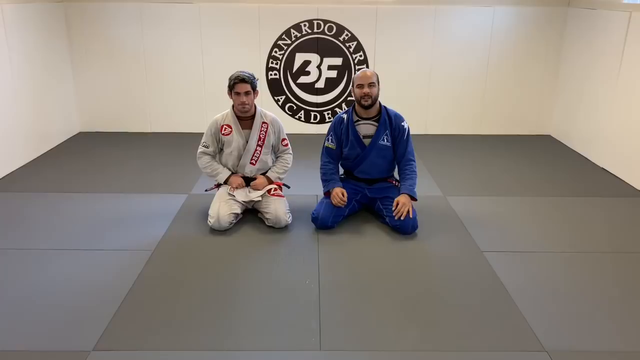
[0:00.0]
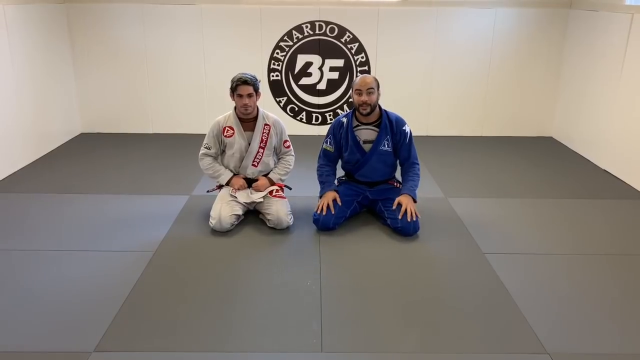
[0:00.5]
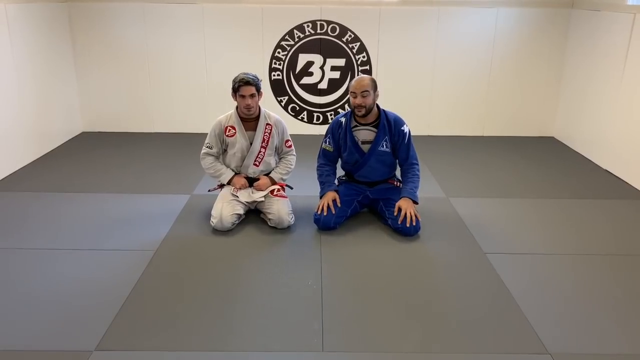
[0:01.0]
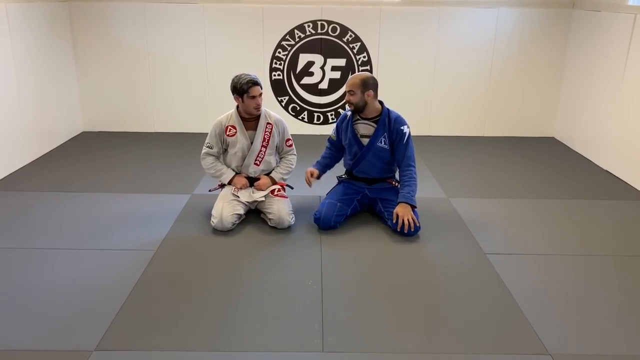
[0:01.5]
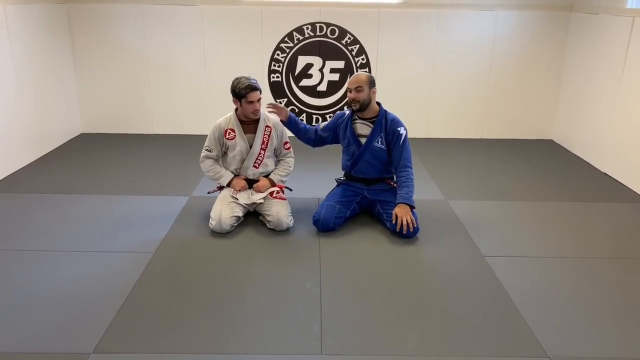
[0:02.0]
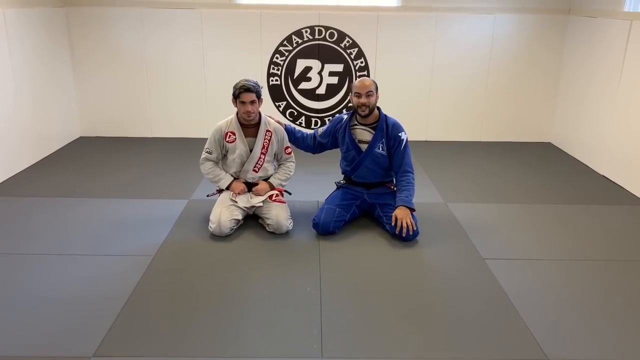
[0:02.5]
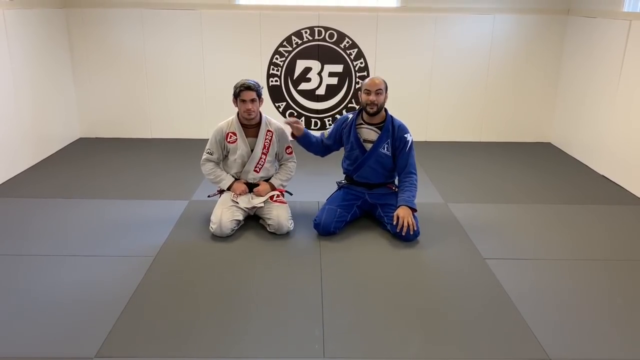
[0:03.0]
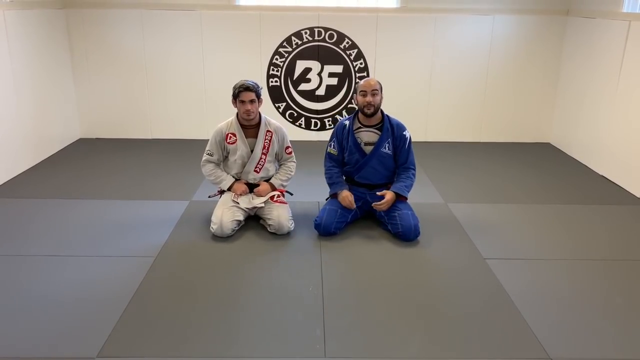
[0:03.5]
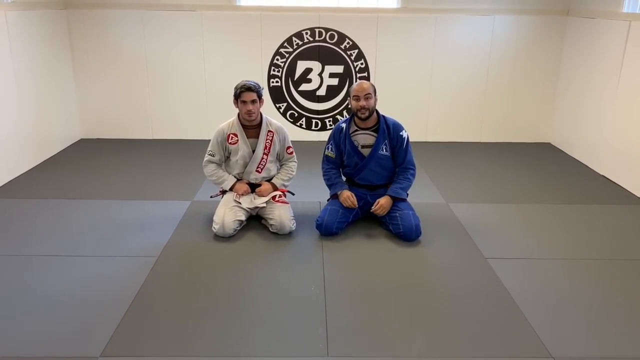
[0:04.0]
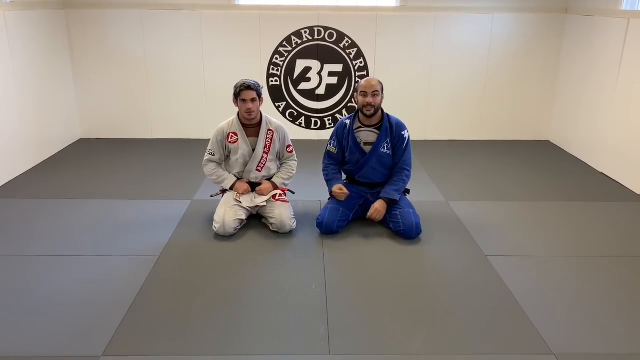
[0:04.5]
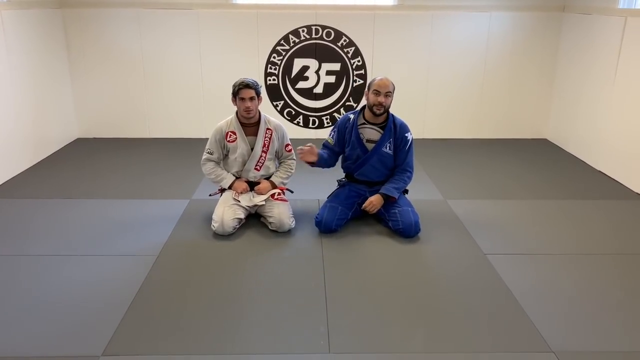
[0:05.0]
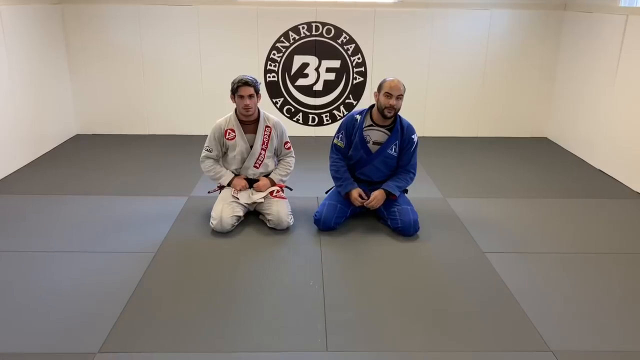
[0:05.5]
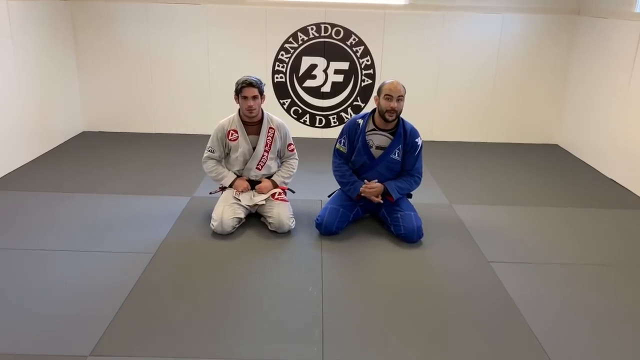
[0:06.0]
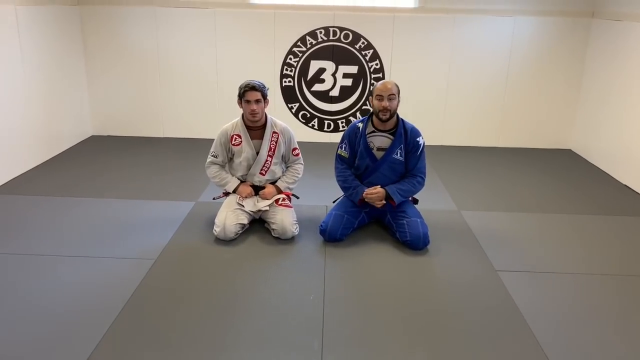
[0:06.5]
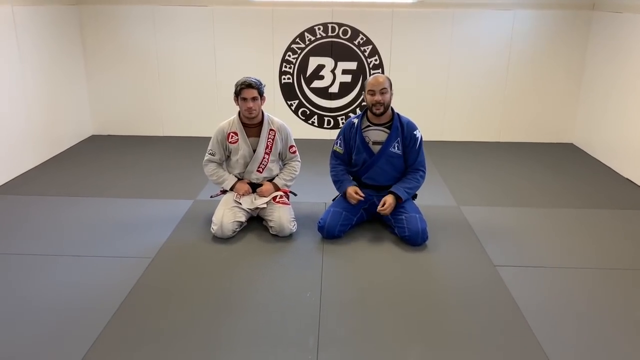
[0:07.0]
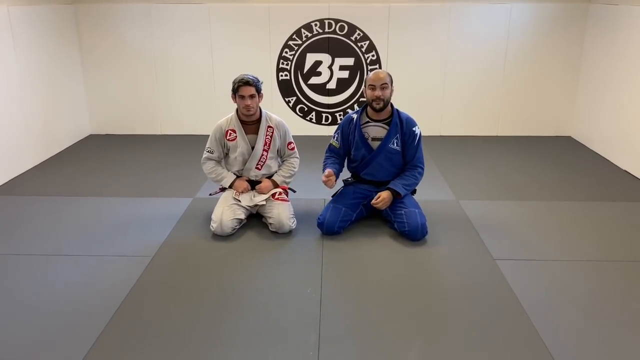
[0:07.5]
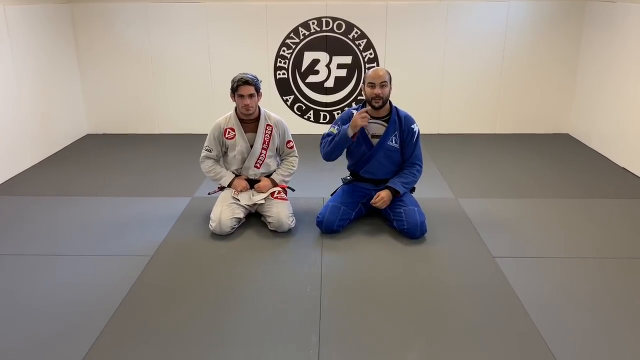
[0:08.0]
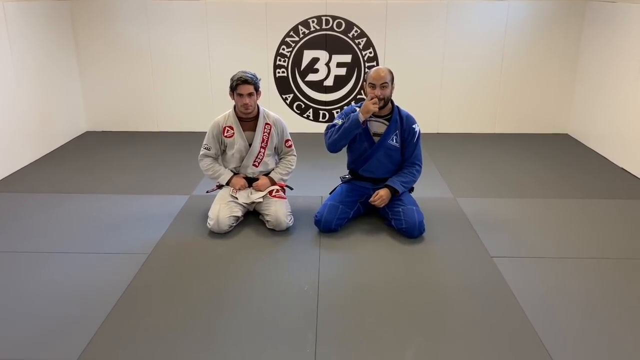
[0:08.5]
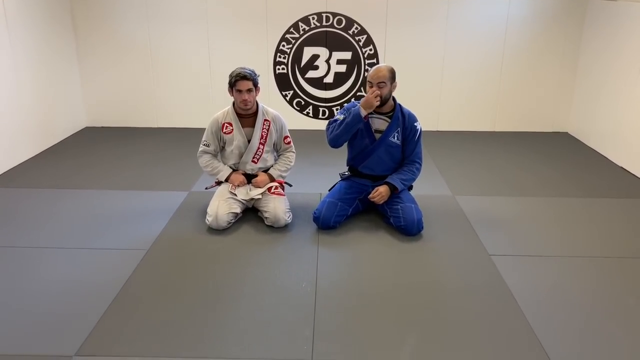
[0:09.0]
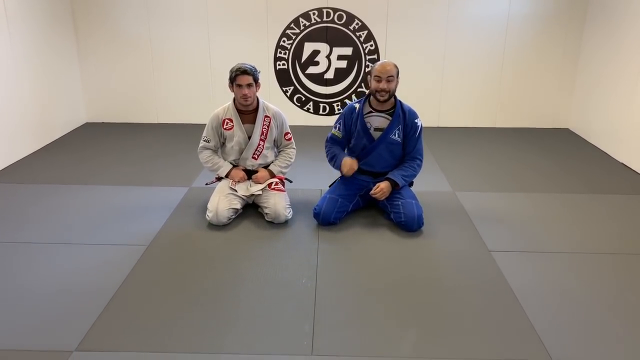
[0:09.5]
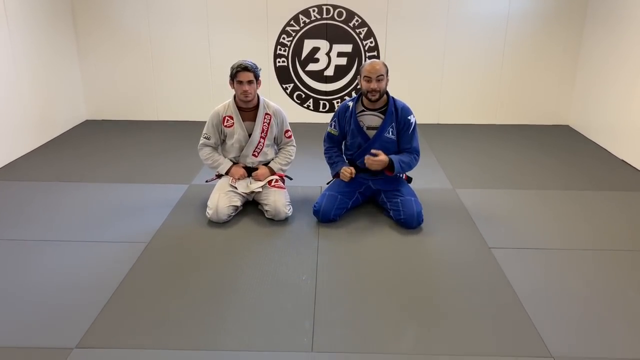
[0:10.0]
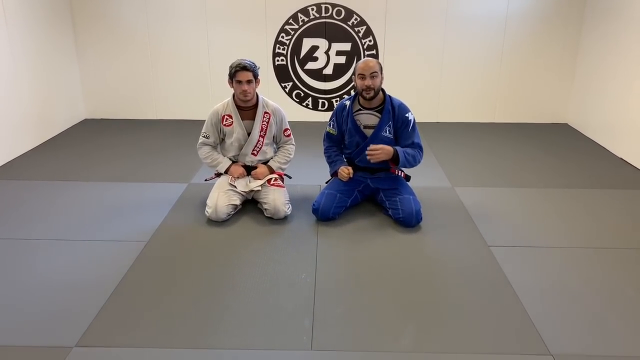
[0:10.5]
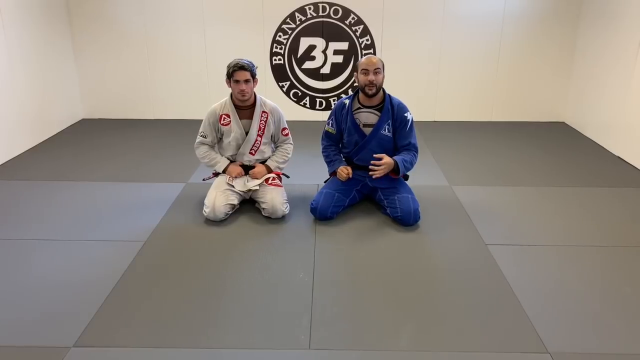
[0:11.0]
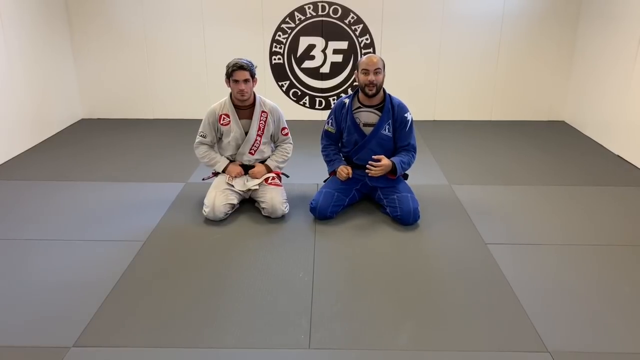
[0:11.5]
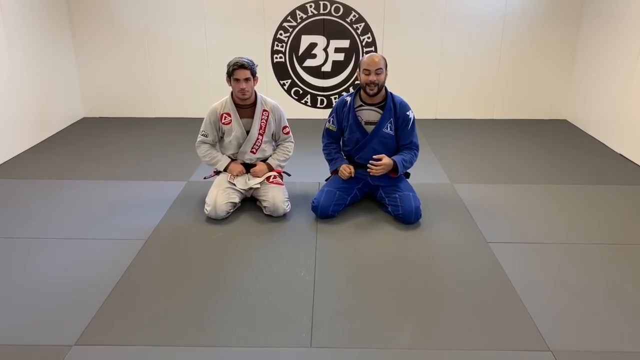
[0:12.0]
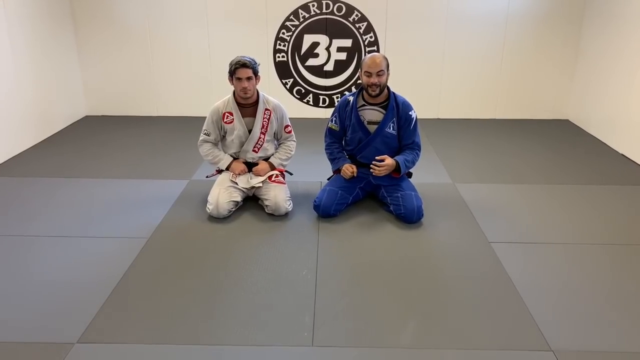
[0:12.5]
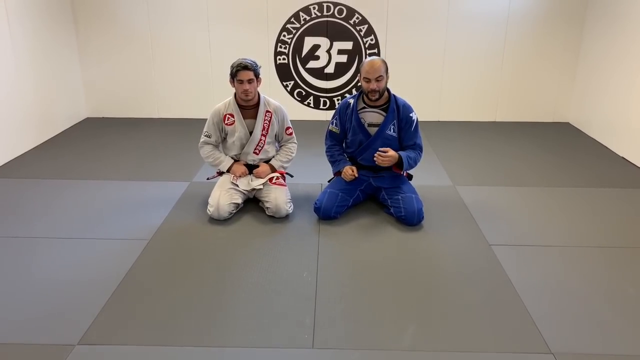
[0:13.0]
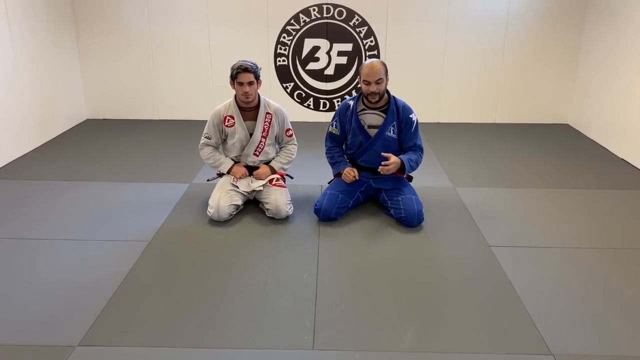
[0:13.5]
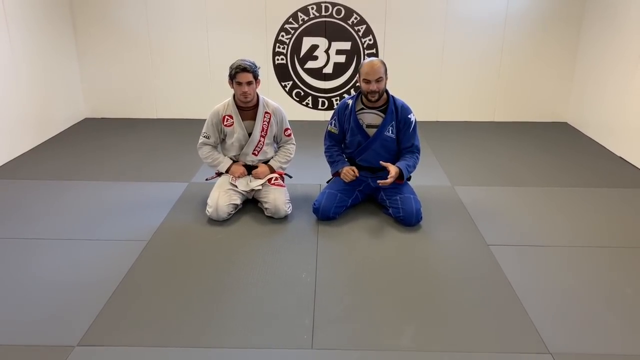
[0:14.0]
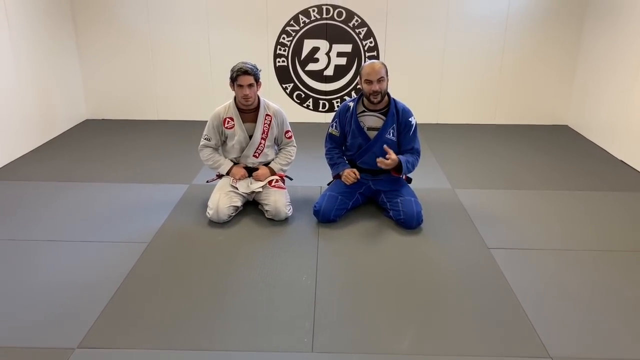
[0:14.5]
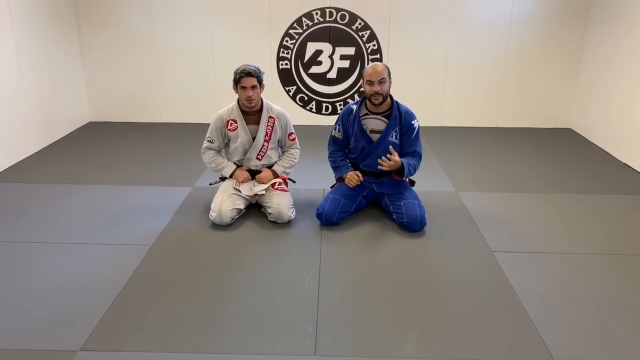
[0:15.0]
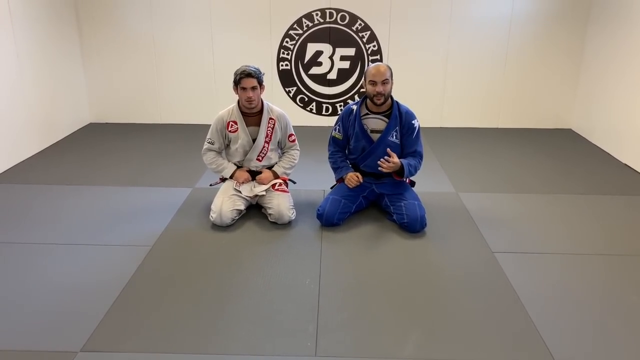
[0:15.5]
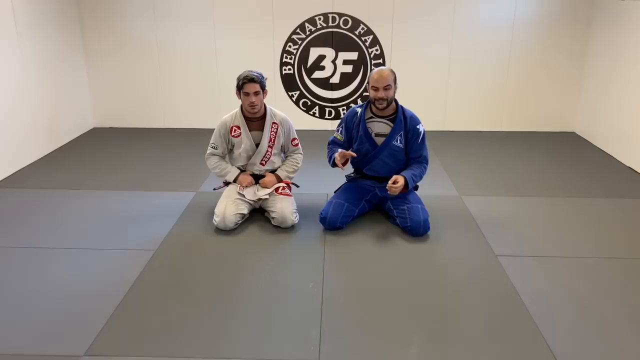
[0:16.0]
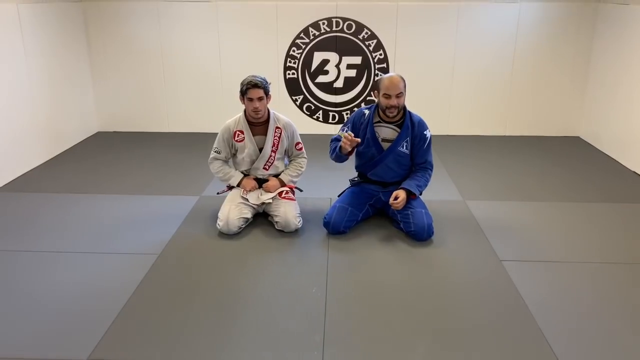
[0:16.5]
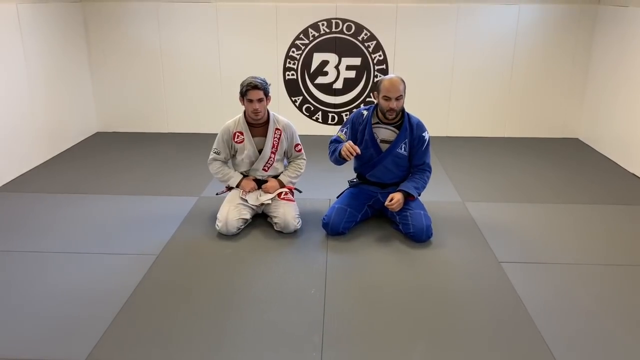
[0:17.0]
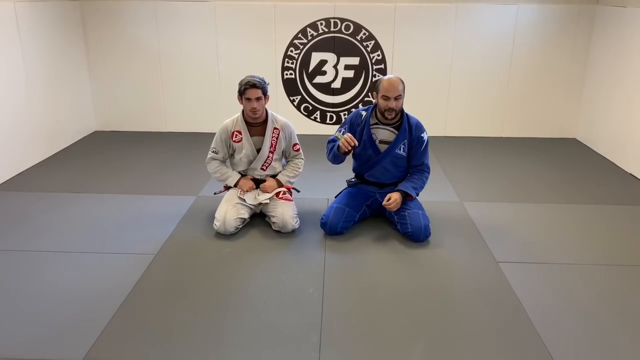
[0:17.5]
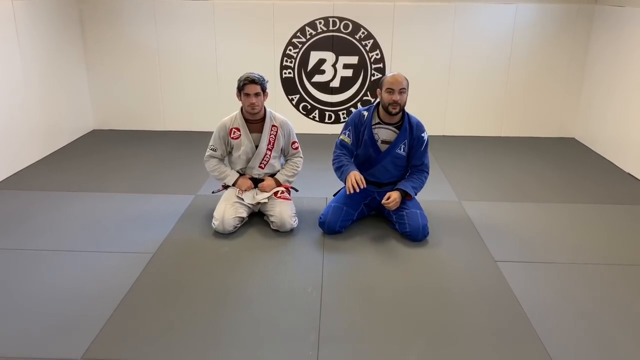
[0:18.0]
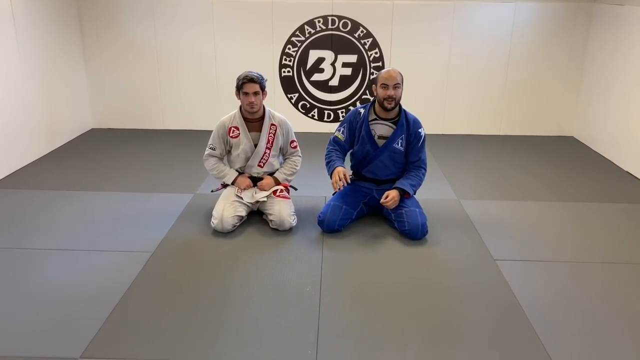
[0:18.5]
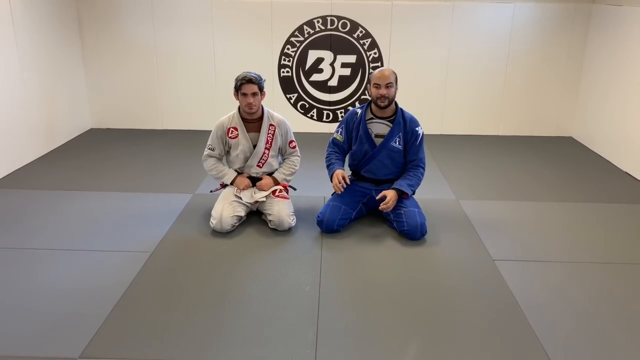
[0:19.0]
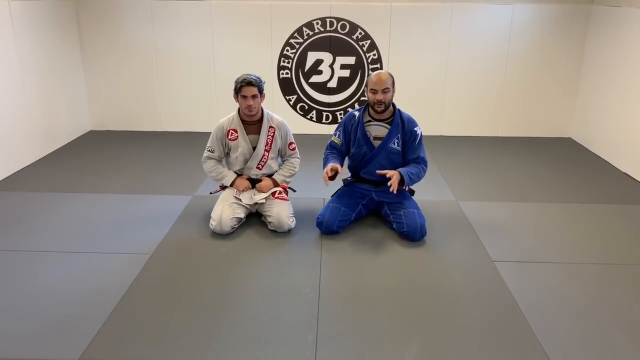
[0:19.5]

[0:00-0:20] The video focuses on martial arts. Two men face the camera. The man on the right side of the screen wears a blue uniform and appears to be a black belt. The other wears a mostly white uniform with some red and is also a black belt. Both start out sitting on their legs, knees bent. The room has mostly white walls, and in the back there is a black circle with text: "Bernardo" is visible, along with partly visible letters "F-A-R", "Academy" in the middle, and "B-F". The man in blue talks and puts his right hand on the back of the other man's nearer shoulder, sometimes looking down at the ground as he talks. He then makes a grabbing motion with his right hand. The man in white looks at him when his shoulder is touched but otherwise stays still.